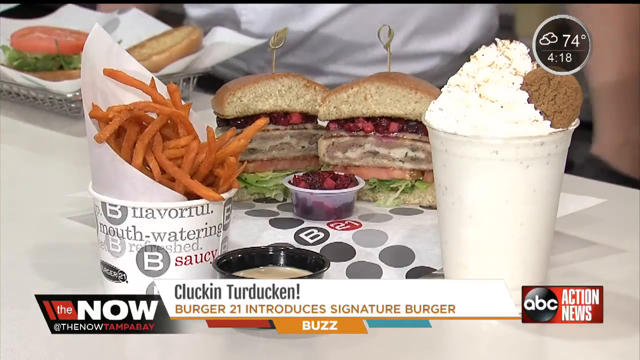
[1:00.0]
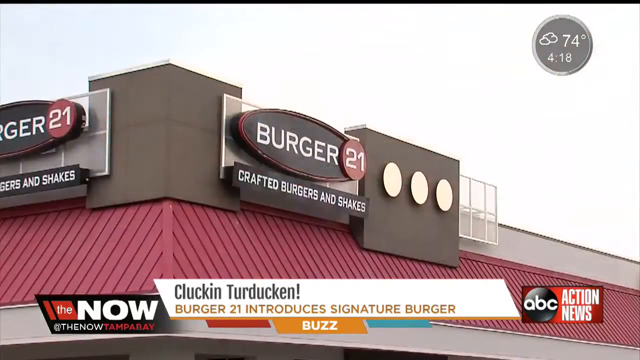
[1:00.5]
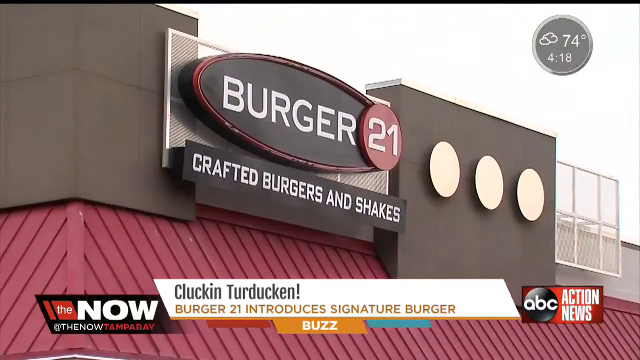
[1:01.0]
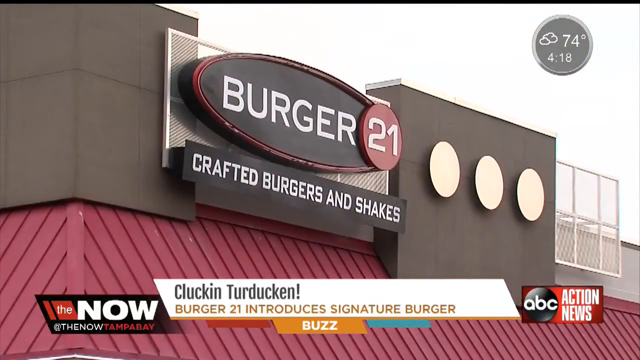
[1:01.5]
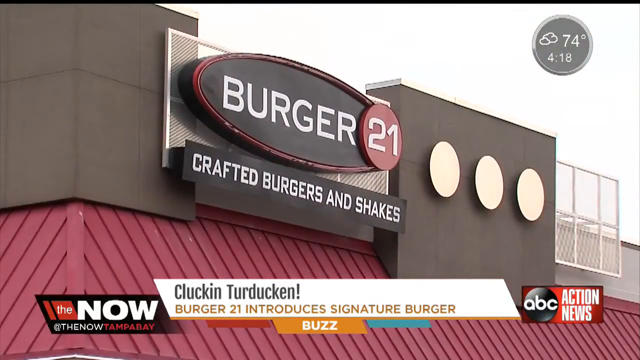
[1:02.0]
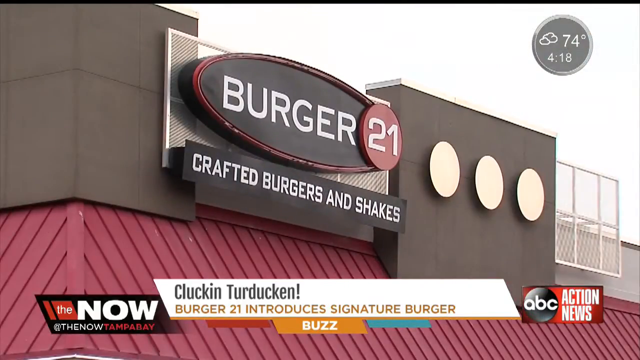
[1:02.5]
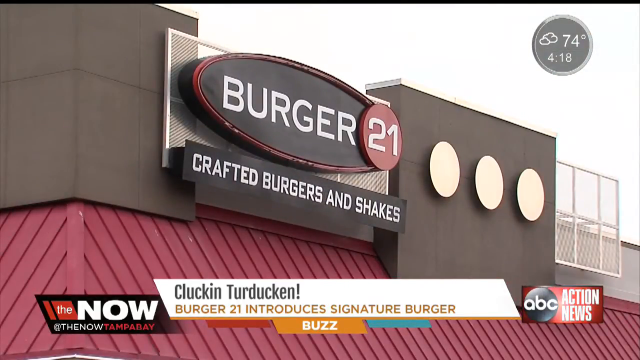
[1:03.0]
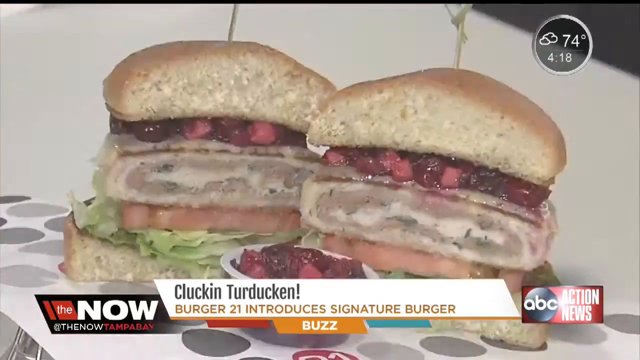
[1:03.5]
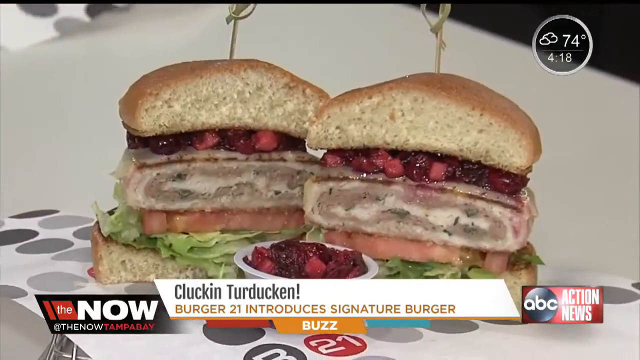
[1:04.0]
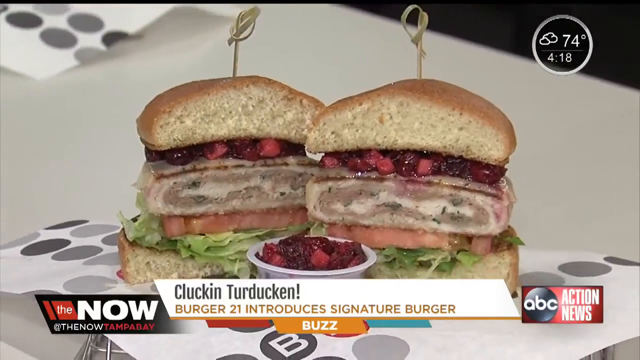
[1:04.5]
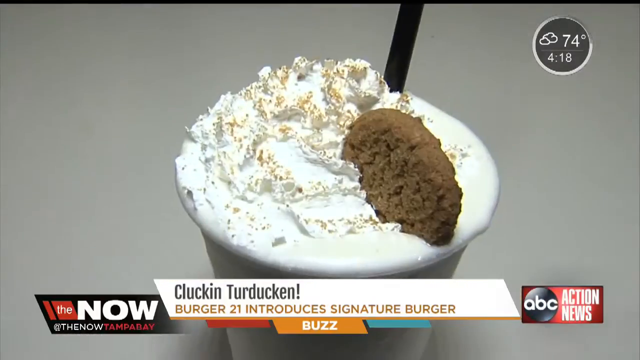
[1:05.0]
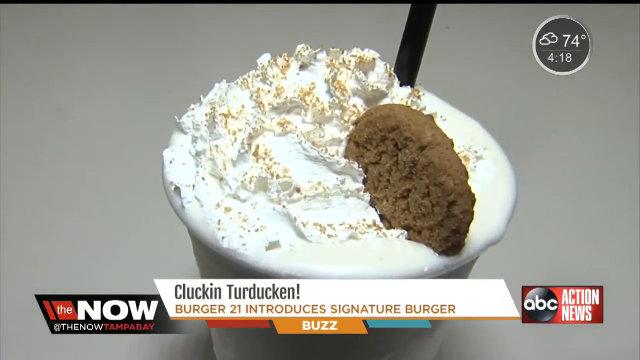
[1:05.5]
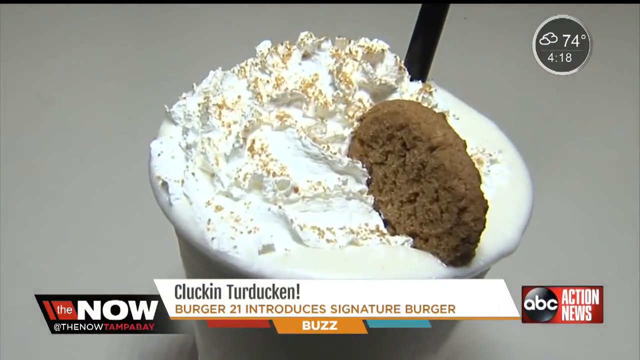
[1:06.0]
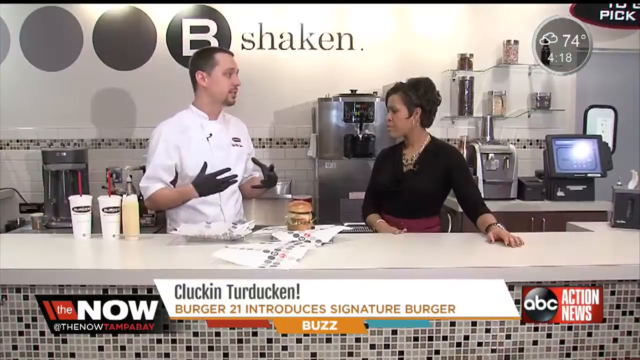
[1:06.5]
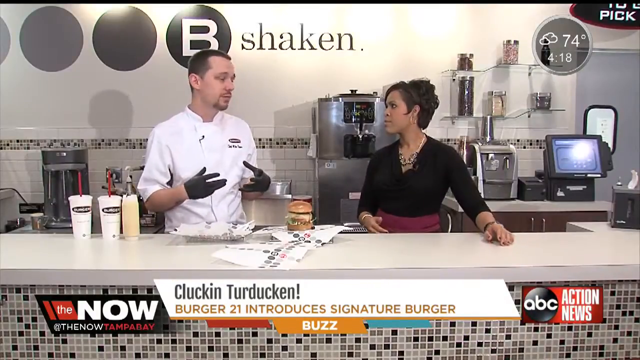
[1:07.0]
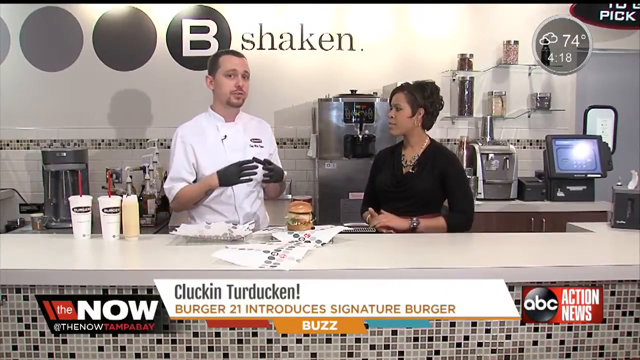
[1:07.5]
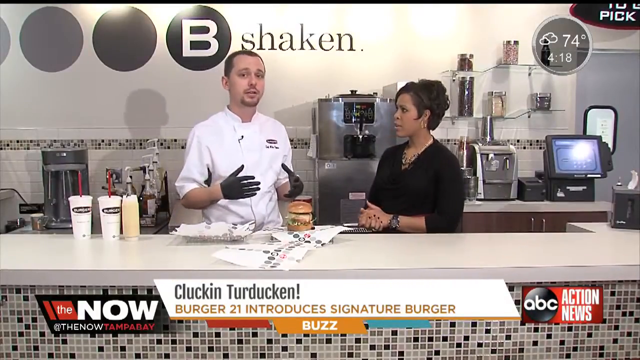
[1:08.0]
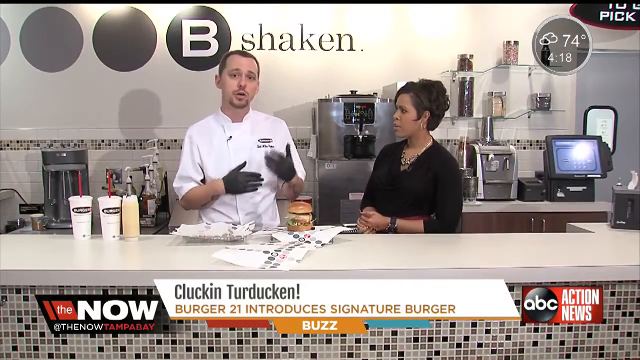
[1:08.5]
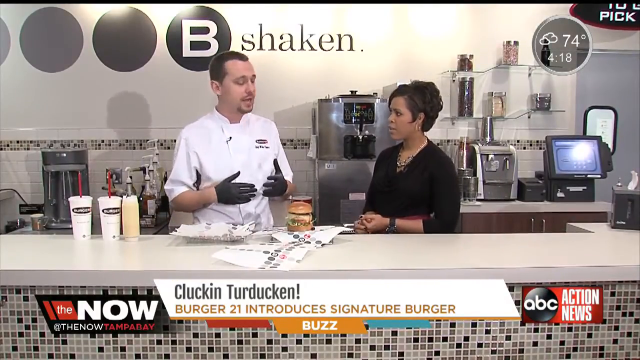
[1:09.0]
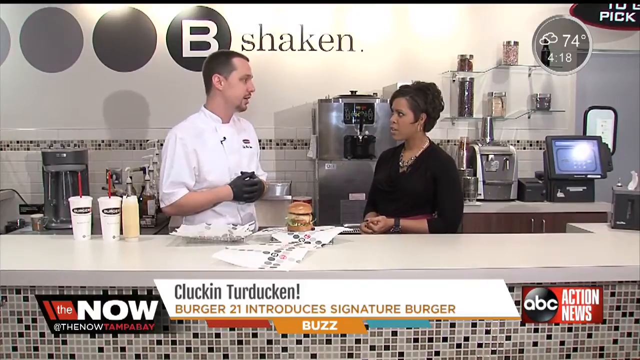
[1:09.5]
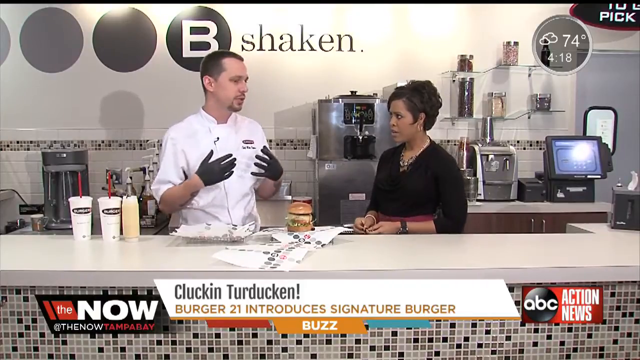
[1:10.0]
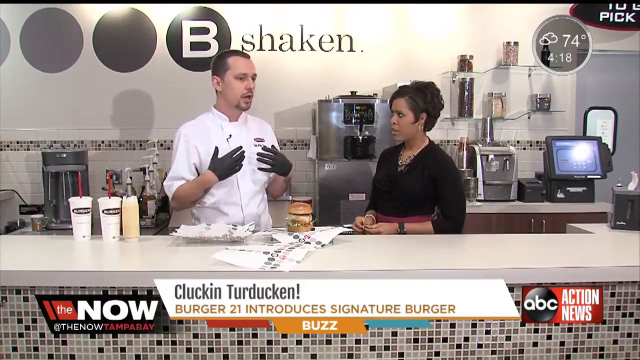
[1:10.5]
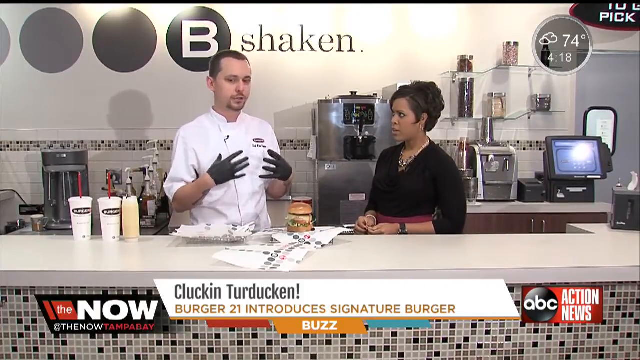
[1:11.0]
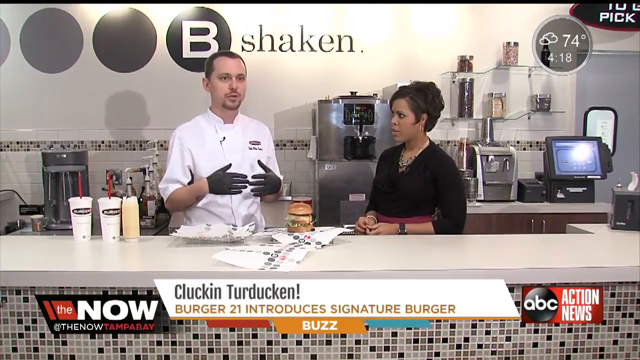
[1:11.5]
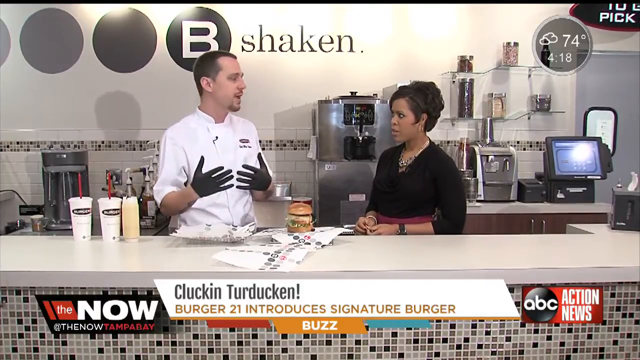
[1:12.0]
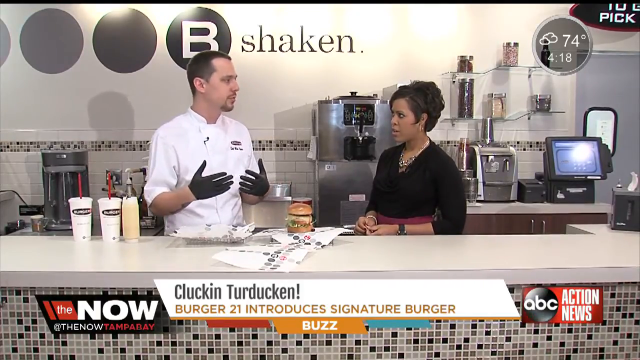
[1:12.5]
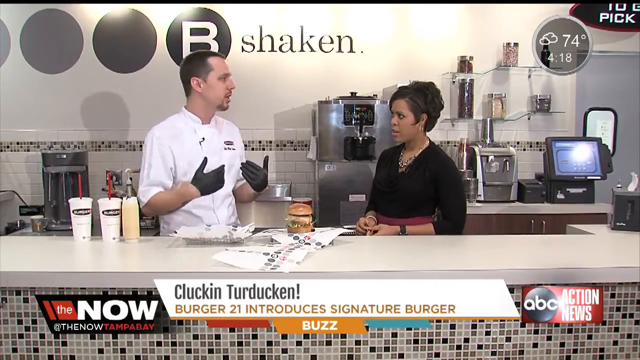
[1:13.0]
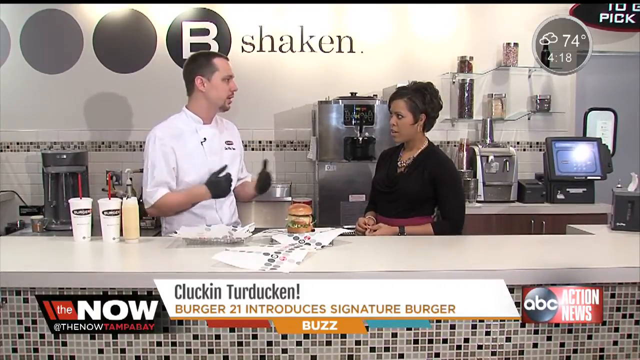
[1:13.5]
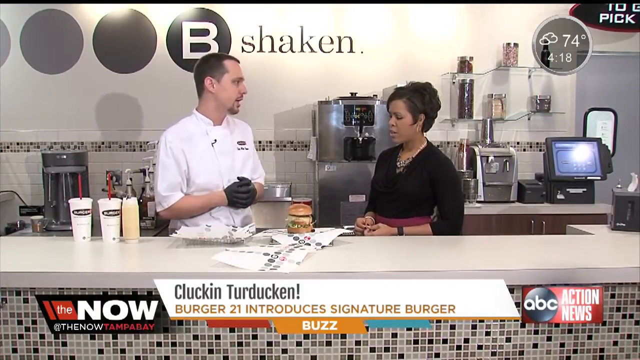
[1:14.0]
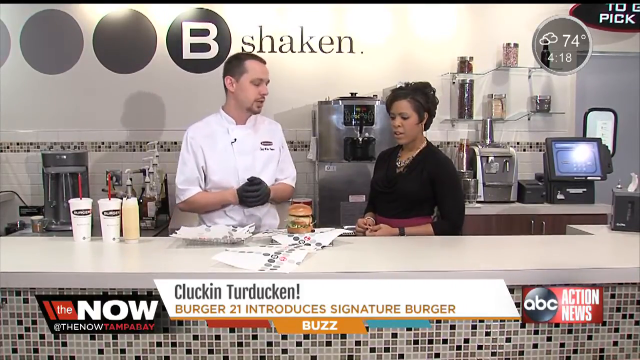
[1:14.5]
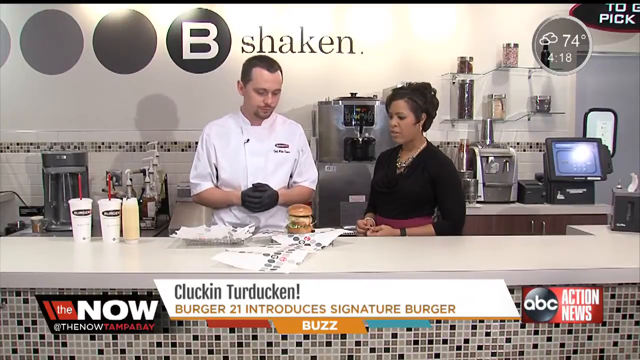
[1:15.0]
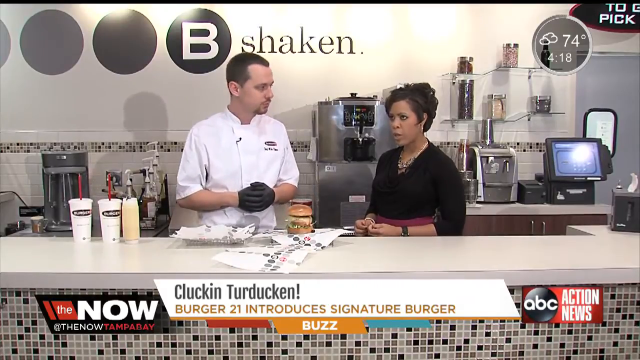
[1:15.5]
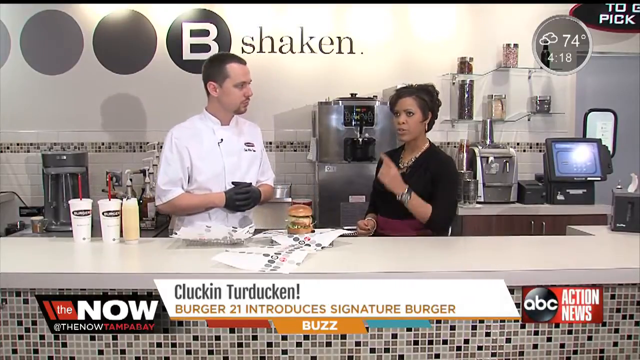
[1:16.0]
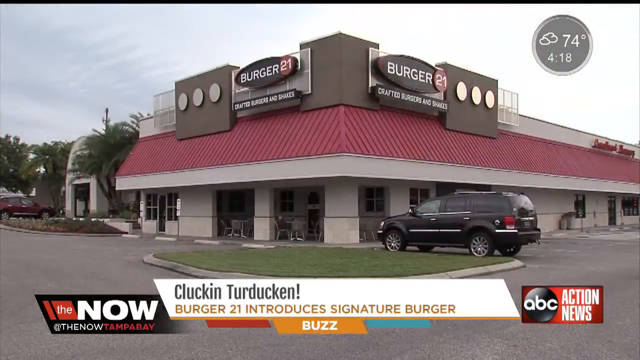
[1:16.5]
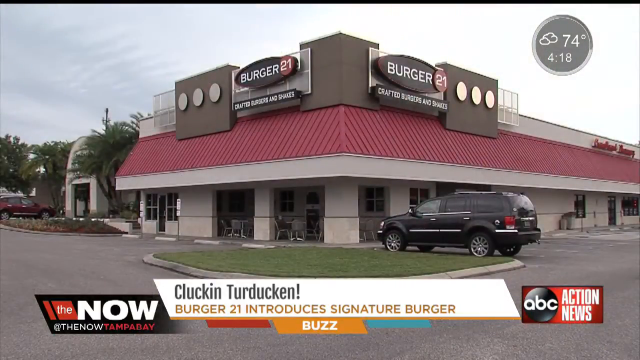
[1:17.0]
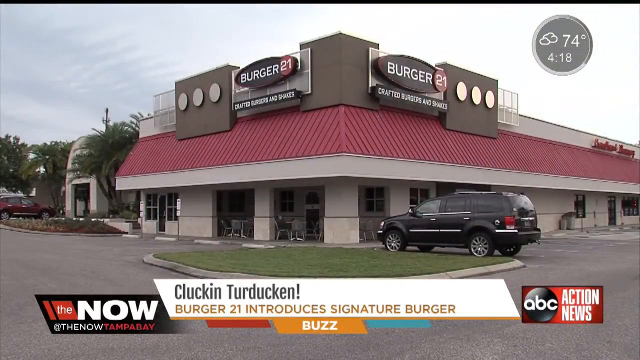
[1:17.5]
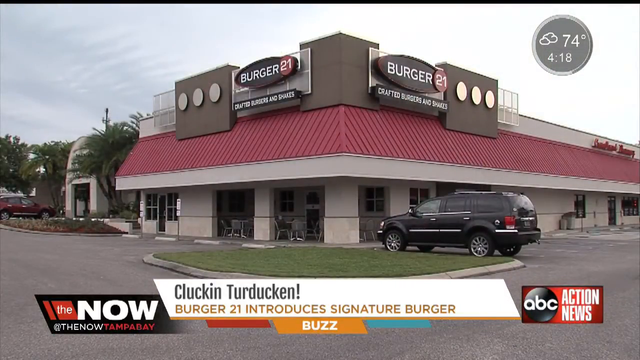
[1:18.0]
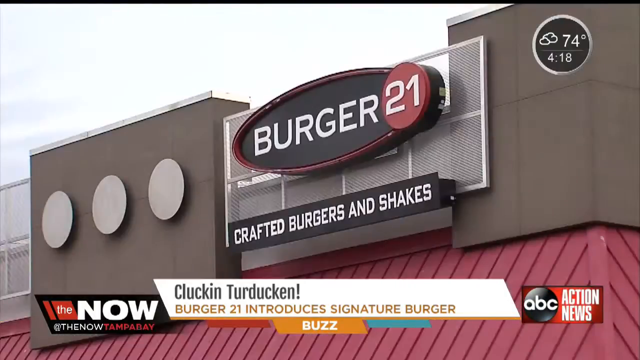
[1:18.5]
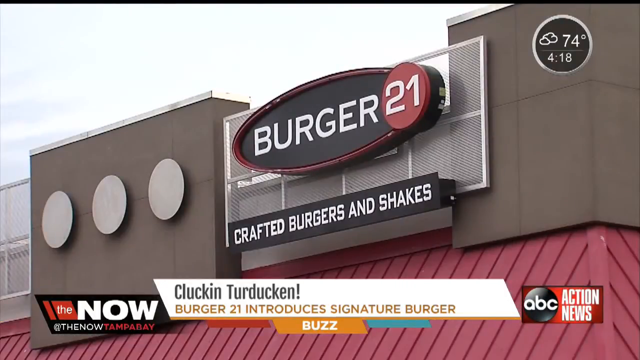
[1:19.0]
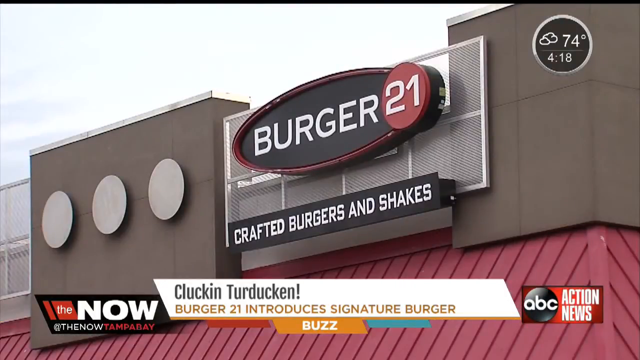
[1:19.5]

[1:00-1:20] The outside of the restaurant building is shown, with "BURGER 21" written and "CRAFTED BURGERS AND SHAKES" underneath. On the table are two burgers; the burger the chef was making has been sliced into two parts, with all the ingredients visible, and it looks appetizing. In front of the two burgers is a small see-through bowl with red contents and a white cup holding a shake topped with white cream sprinkled with something brown, with a biscuit on the cream. The chef explains something to the lady, with a burger in front of them and the sauce and two cups of shakes next to the chef. The outside of the restaurant is then shown again.